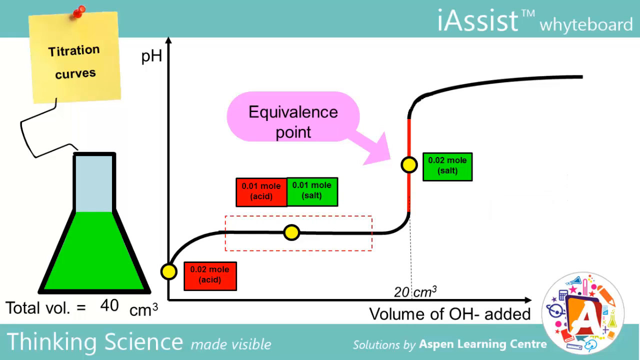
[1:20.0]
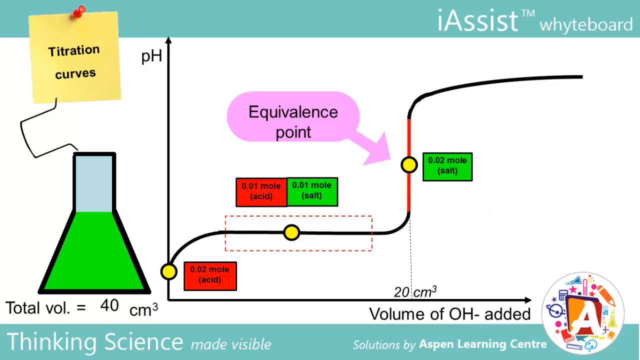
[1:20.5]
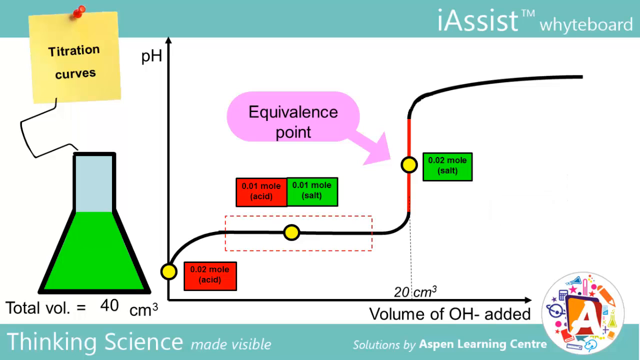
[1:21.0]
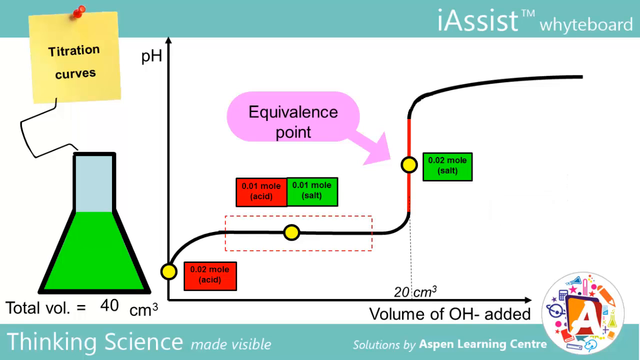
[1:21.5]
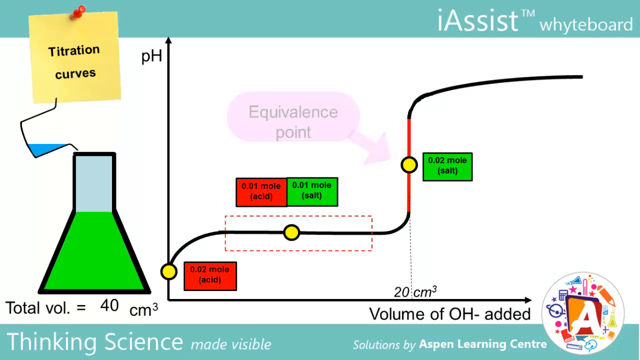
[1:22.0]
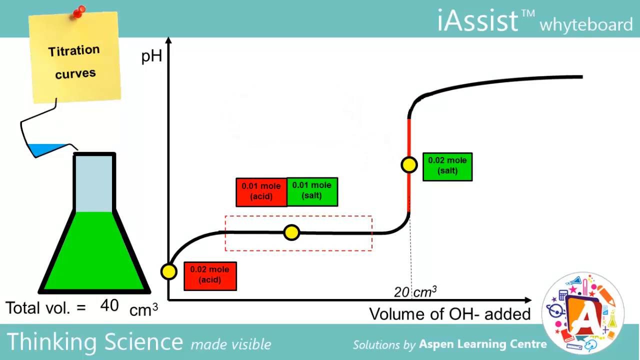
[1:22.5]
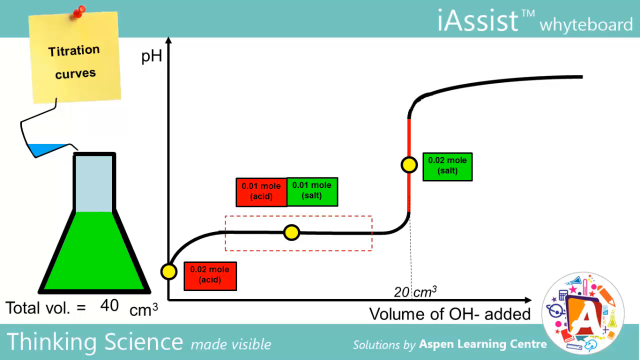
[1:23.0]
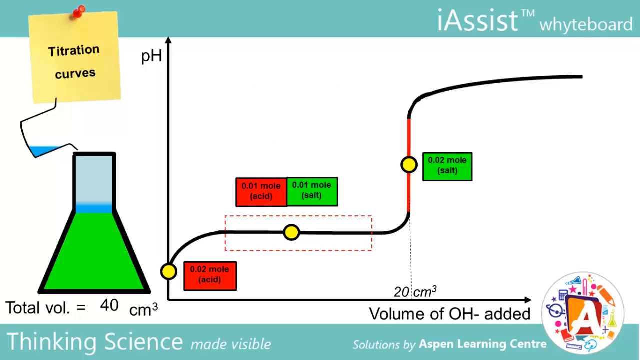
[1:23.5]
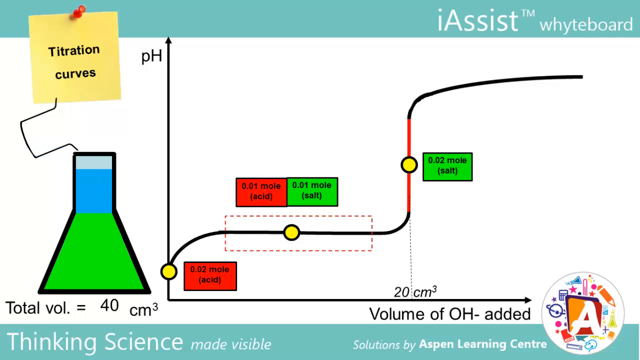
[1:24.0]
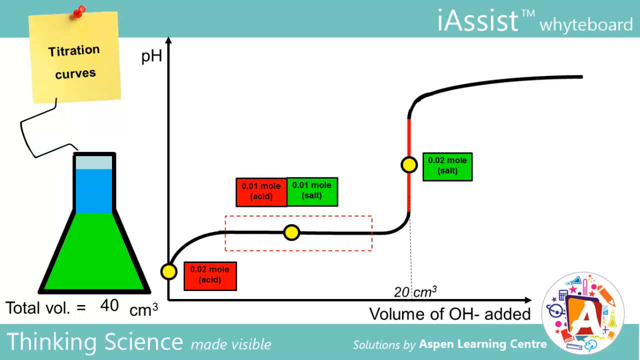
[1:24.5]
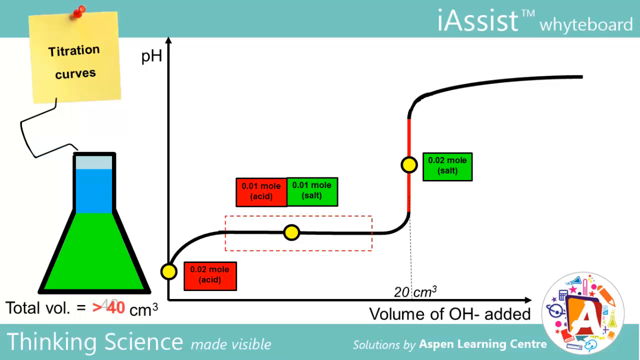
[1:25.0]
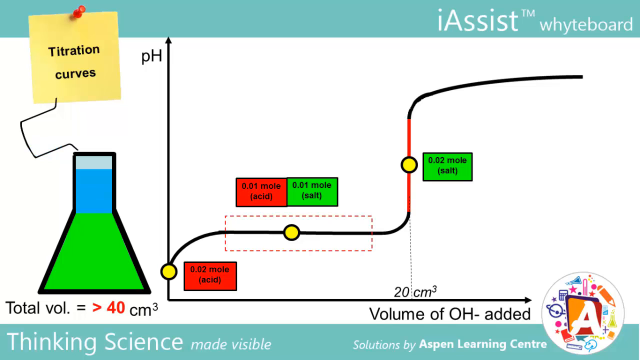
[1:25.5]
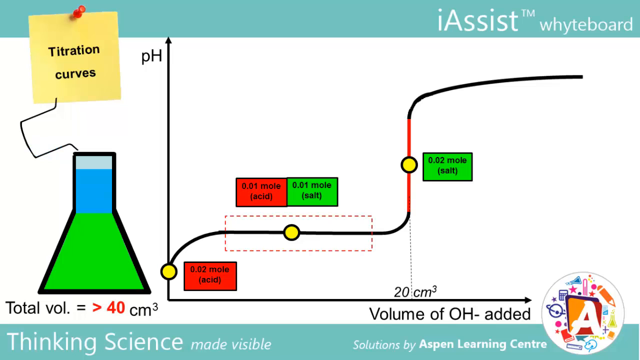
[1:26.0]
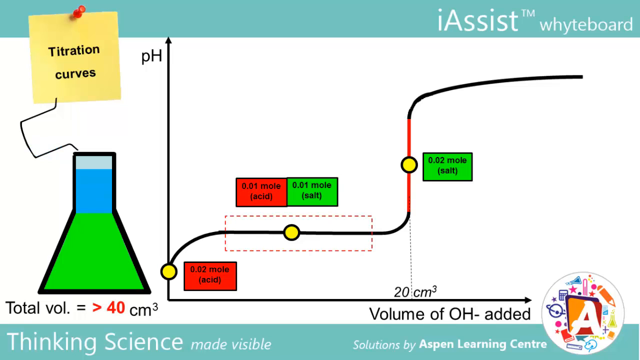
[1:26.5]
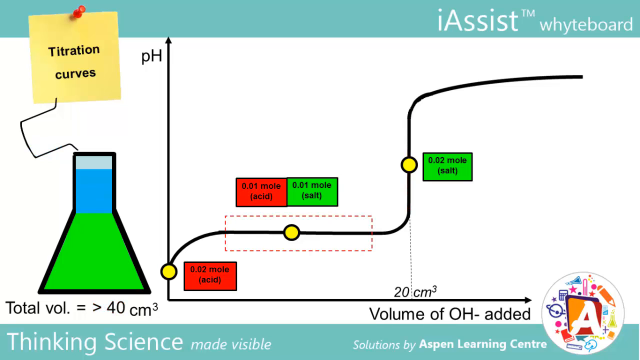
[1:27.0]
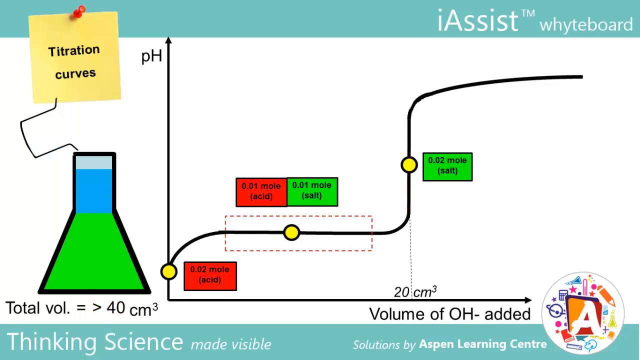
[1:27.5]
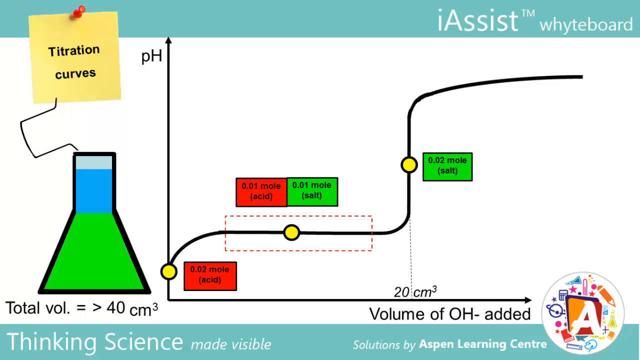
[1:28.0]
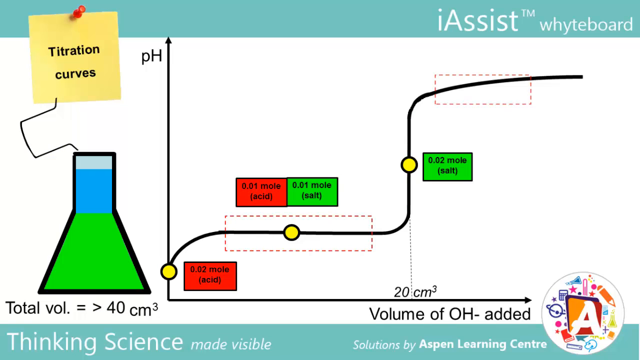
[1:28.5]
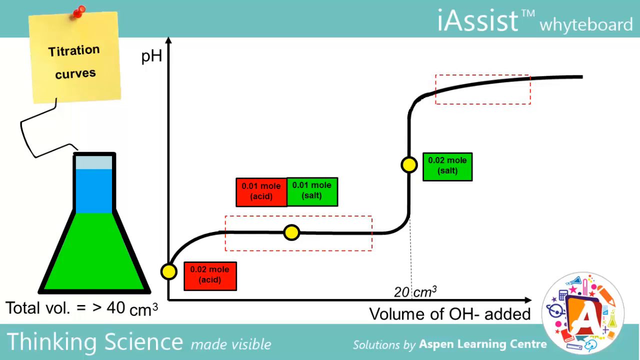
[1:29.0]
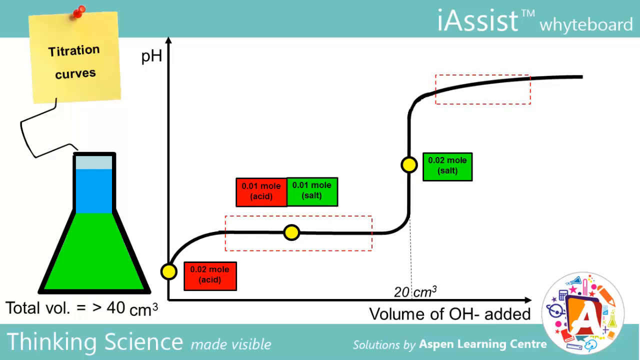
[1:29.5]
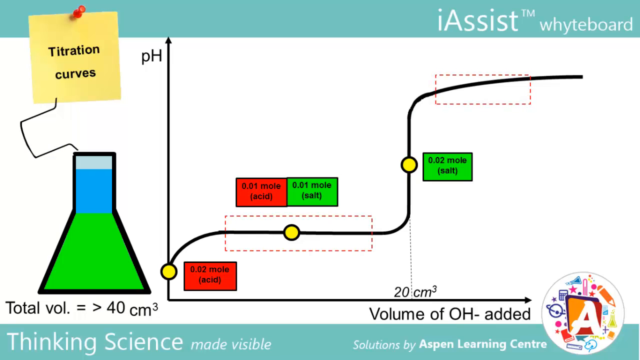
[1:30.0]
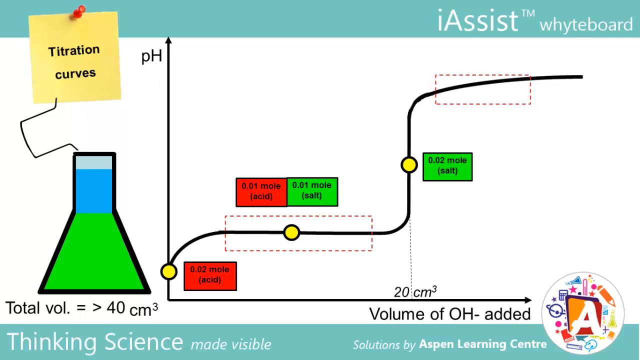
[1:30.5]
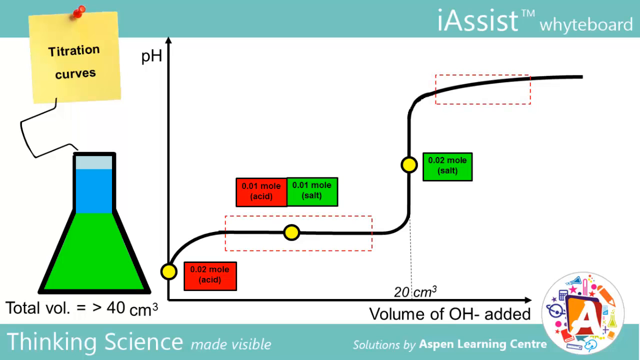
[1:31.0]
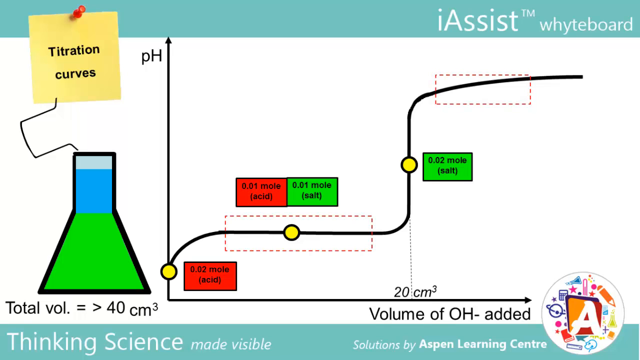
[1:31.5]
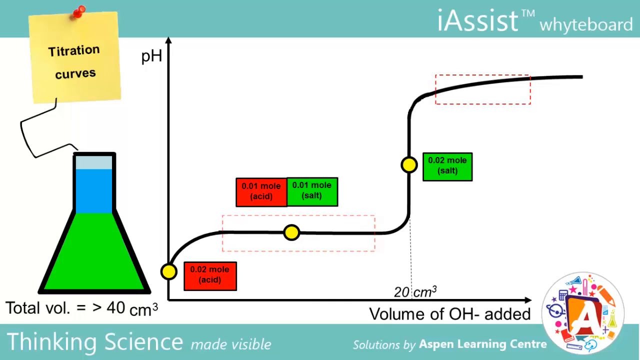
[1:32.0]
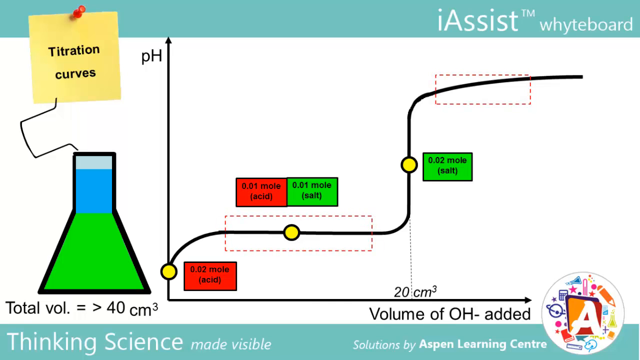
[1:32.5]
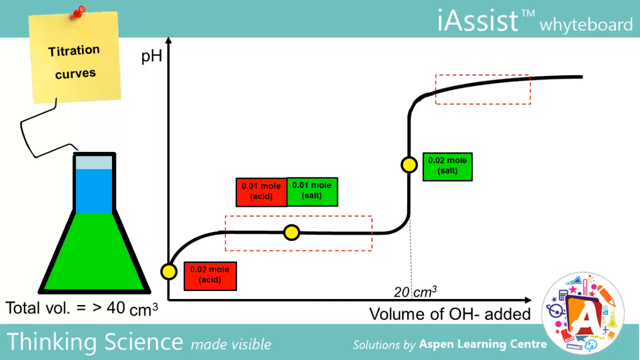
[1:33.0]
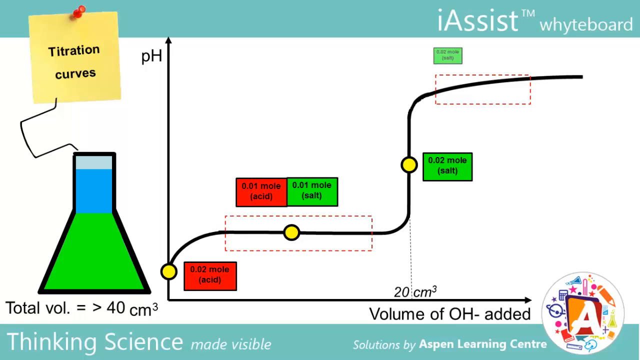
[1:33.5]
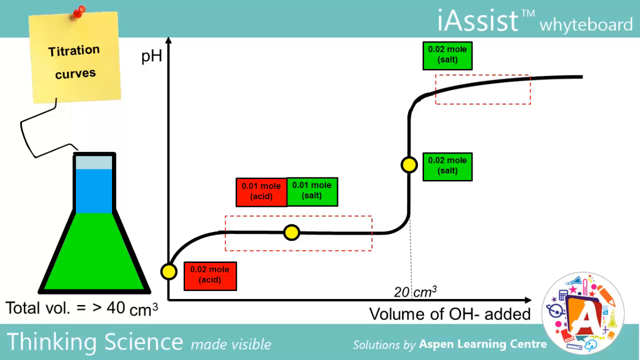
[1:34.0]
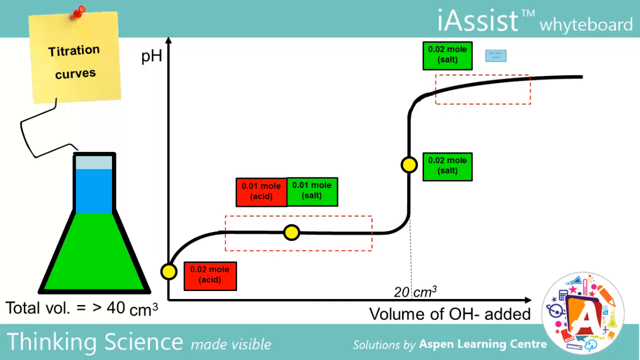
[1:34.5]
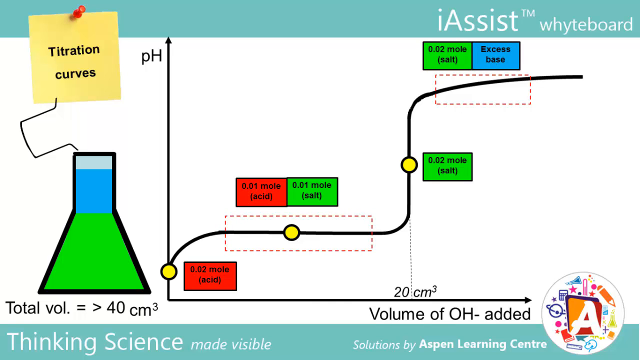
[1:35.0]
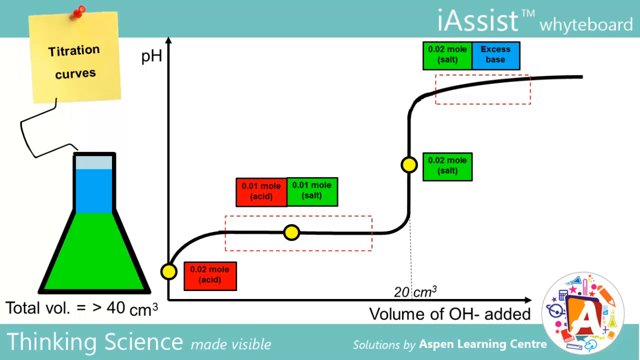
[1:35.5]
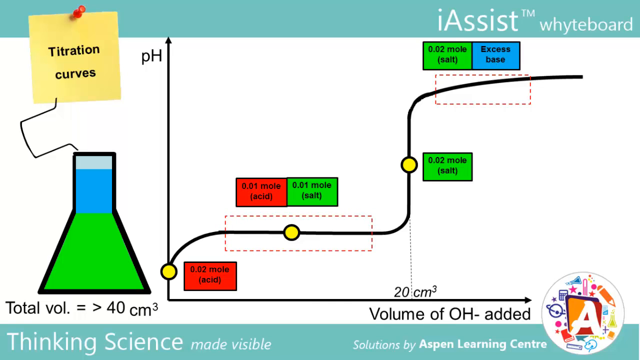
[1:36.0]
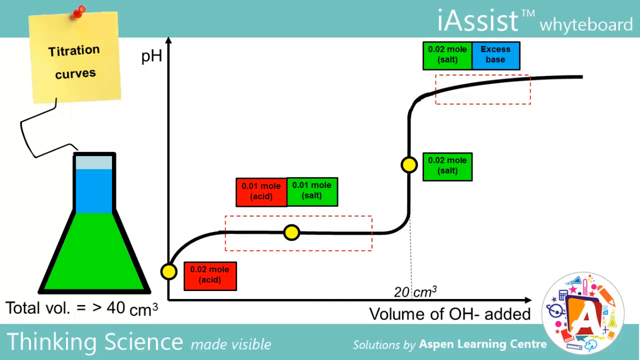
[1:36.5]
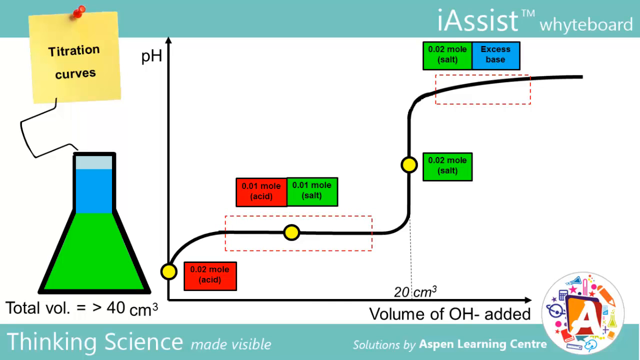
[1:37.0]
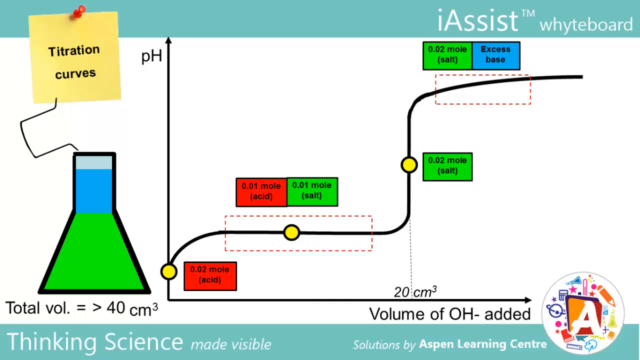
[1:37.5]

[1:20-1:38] On the left side of the frame there is a drawing of a container with a blue liquid inside, and this blue liquid is poured into the container represented below the first. Then the red line on the curve disappears in the graphic, and another line of the same curve is highlighted by a dotted rectangle positioned at the top right of the image. A green rectangle with a rather thick black border appears immediately above the dotted rectangle, and a blue rectangle appears next to it; both rectangular banners contain black inscriptions. Throughout, a blue banner runs along the top of the screen, with white inscriptions on the right and a yellow post-it with black inscriptions on the left. The animations run smoothly. In the lower right corner there is a particularly colorful logo.